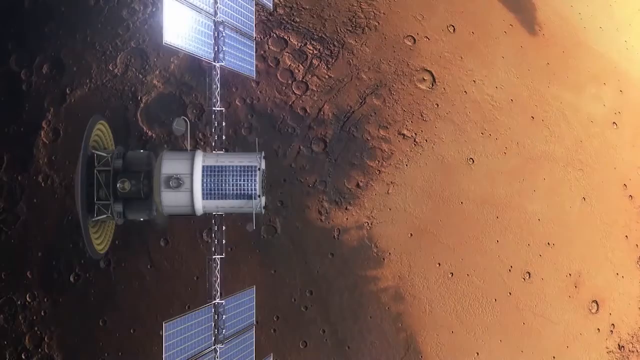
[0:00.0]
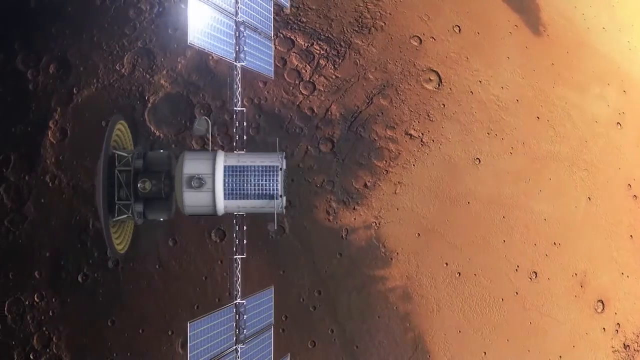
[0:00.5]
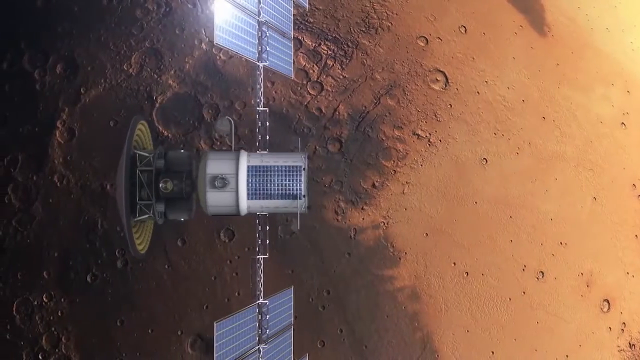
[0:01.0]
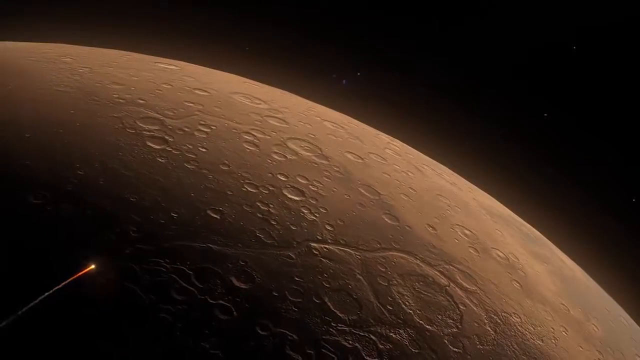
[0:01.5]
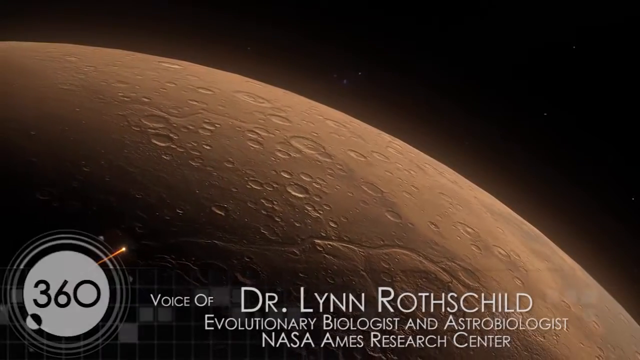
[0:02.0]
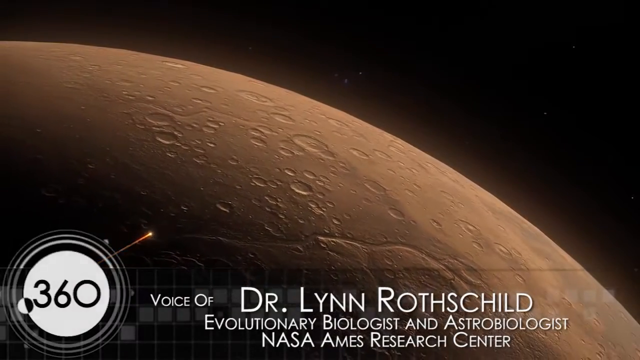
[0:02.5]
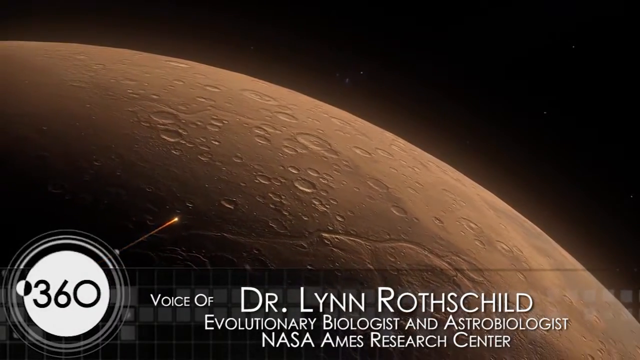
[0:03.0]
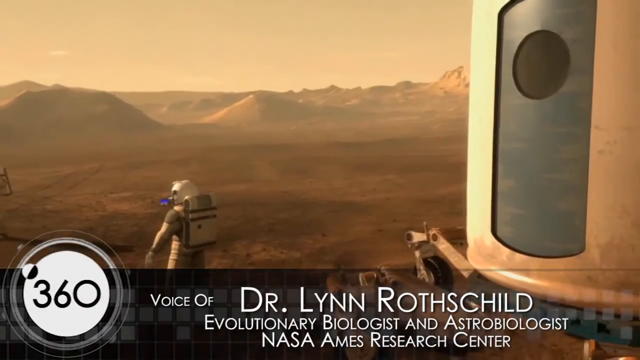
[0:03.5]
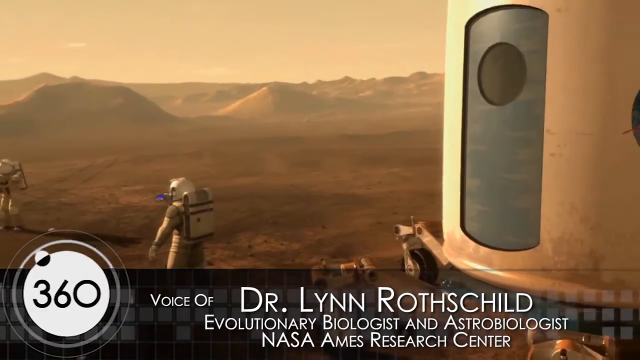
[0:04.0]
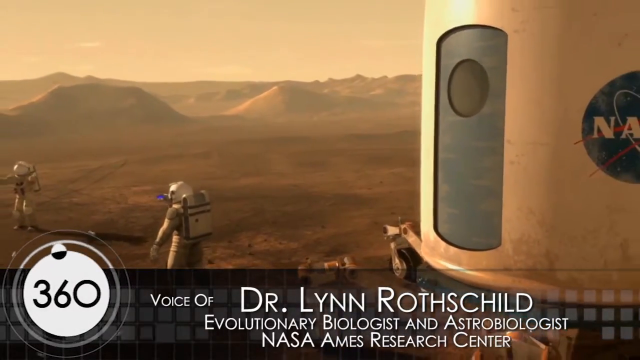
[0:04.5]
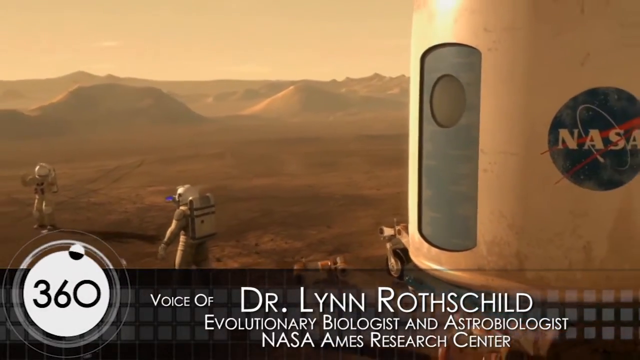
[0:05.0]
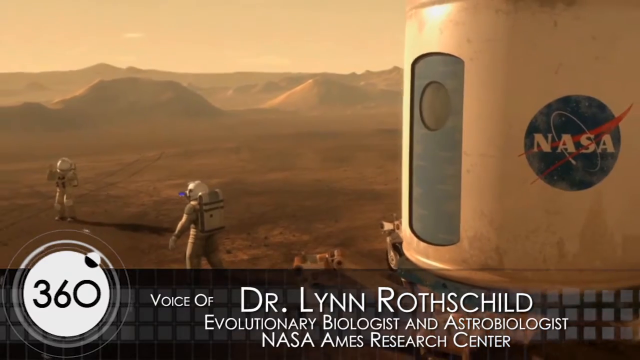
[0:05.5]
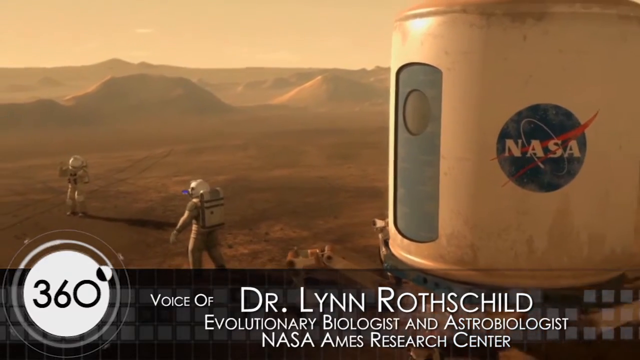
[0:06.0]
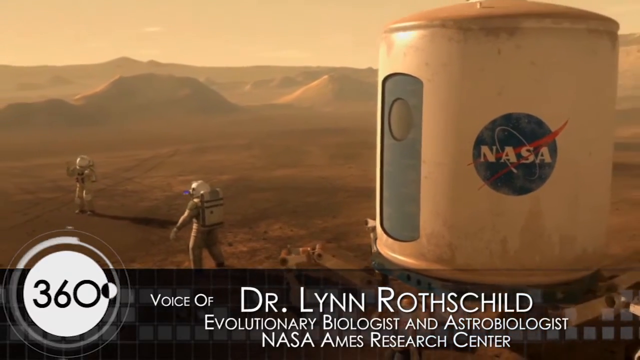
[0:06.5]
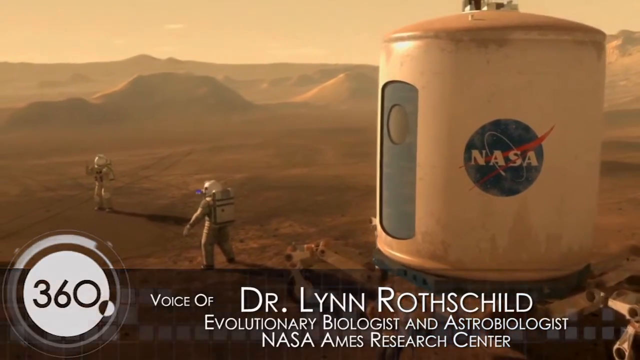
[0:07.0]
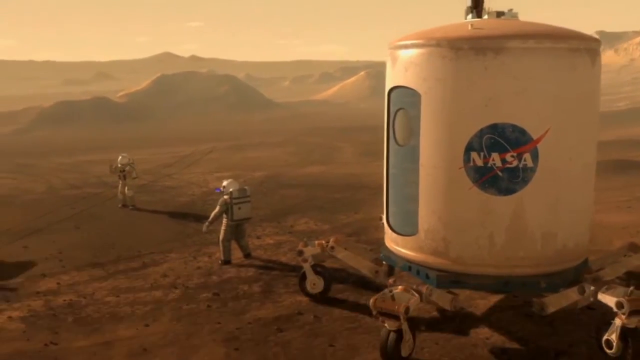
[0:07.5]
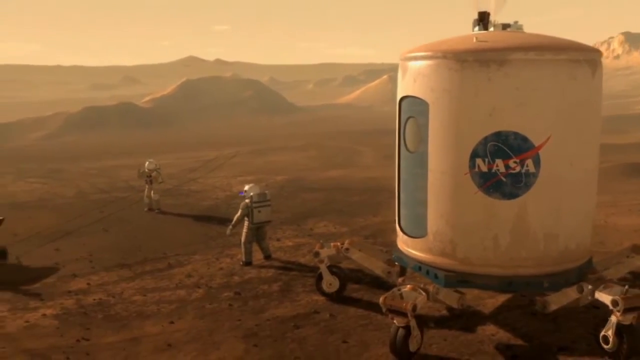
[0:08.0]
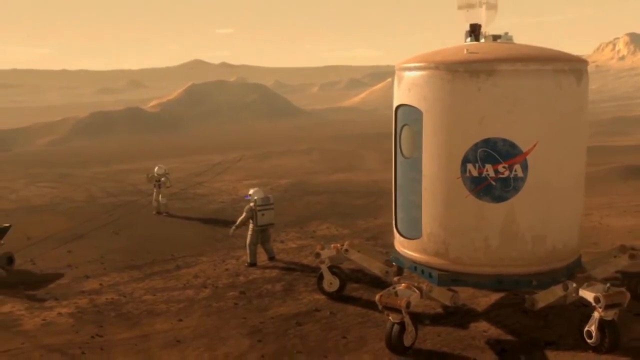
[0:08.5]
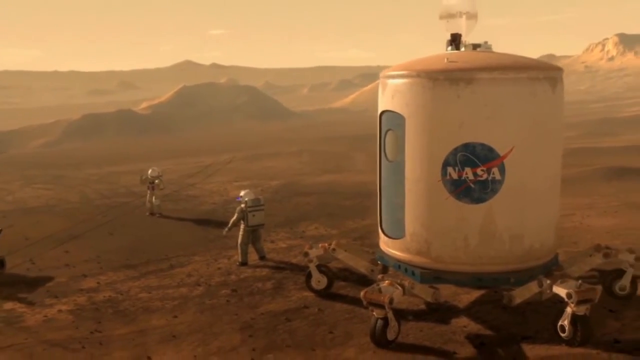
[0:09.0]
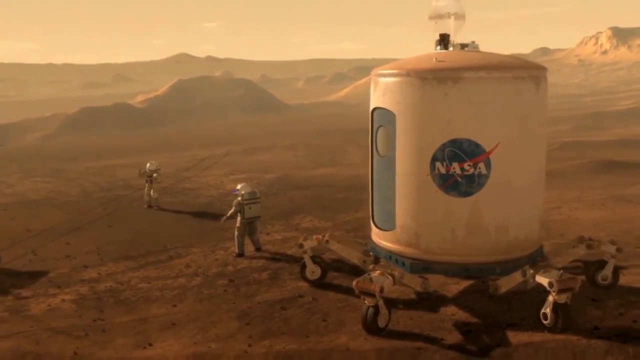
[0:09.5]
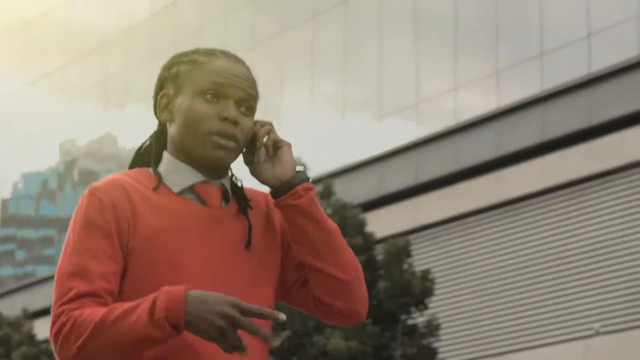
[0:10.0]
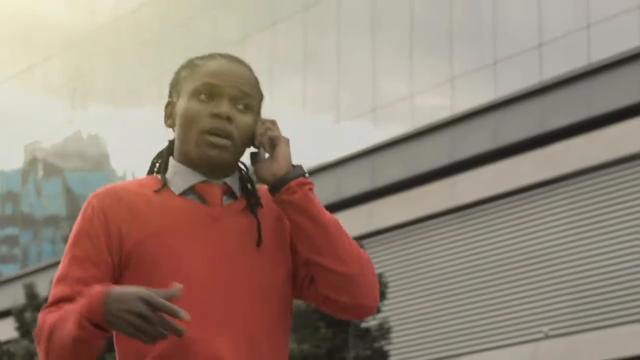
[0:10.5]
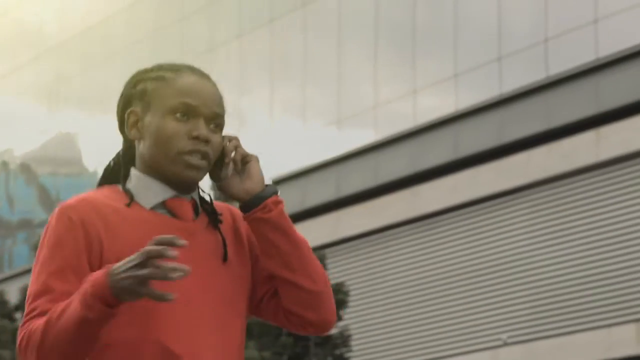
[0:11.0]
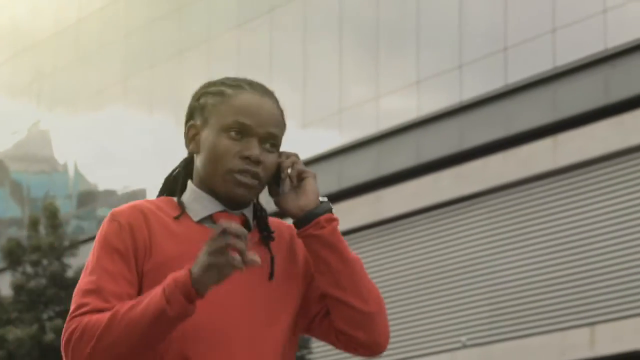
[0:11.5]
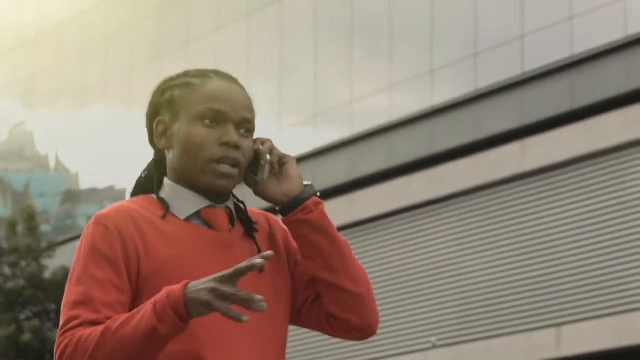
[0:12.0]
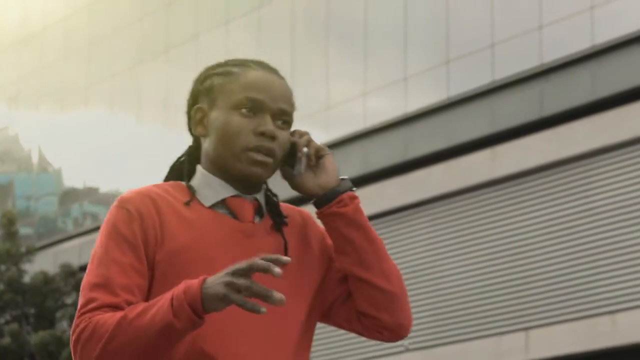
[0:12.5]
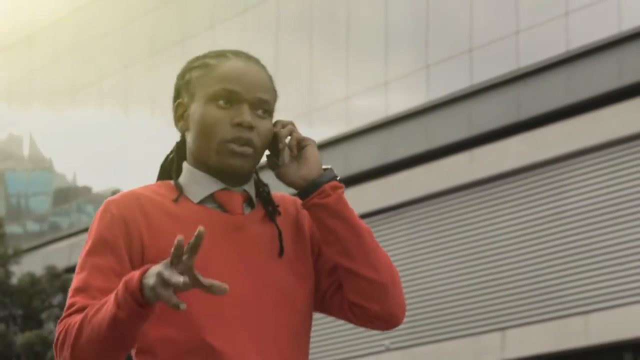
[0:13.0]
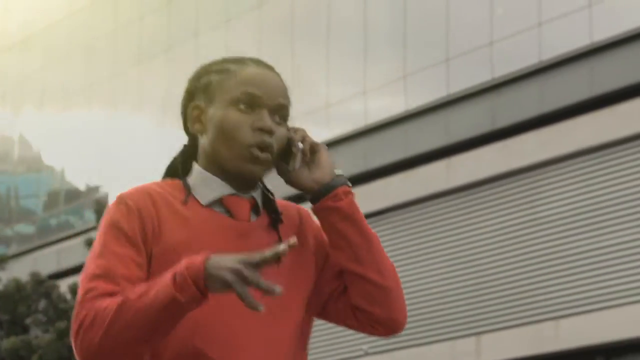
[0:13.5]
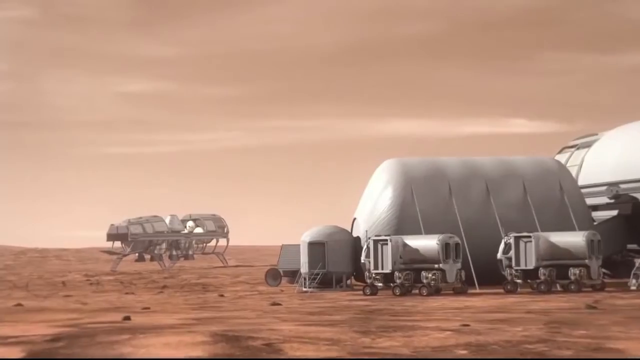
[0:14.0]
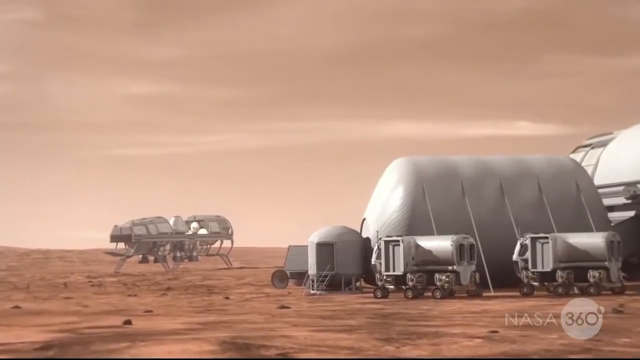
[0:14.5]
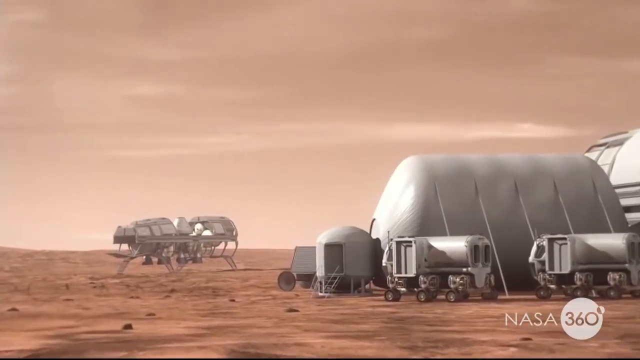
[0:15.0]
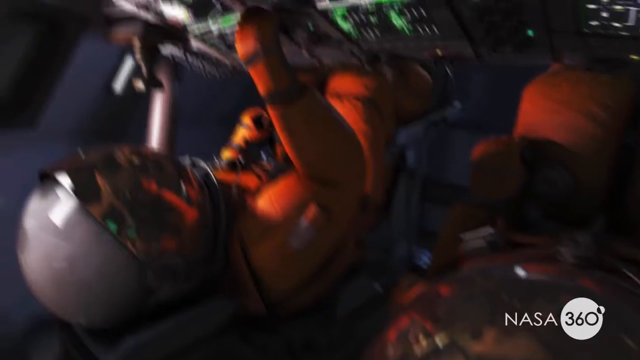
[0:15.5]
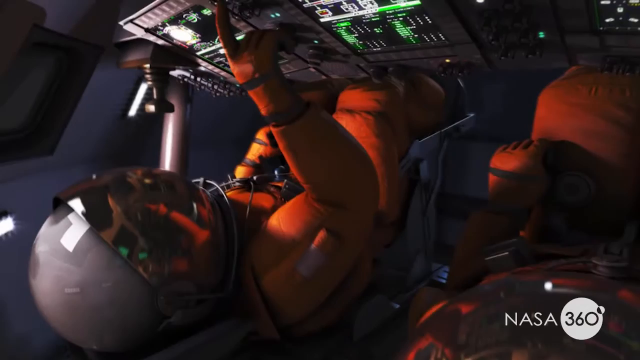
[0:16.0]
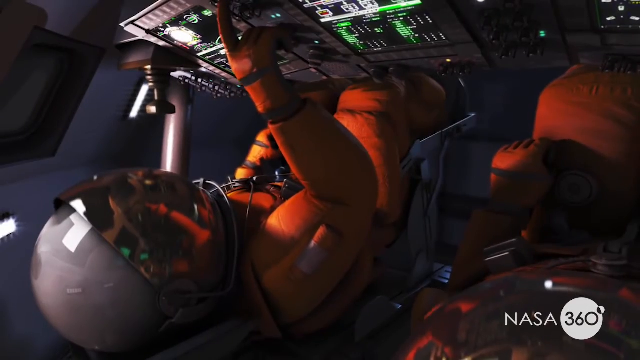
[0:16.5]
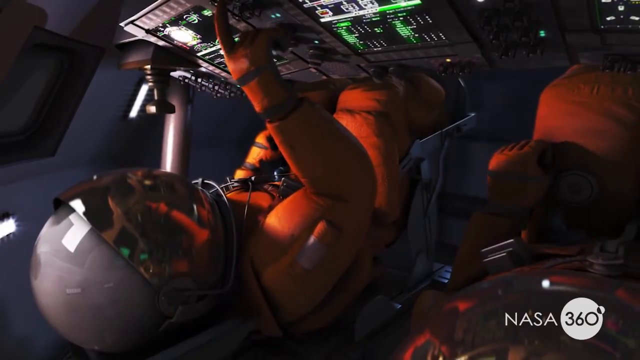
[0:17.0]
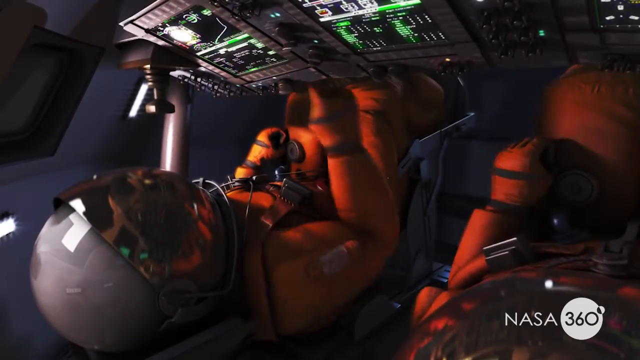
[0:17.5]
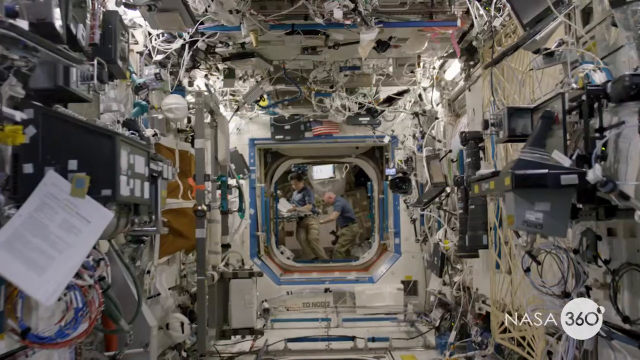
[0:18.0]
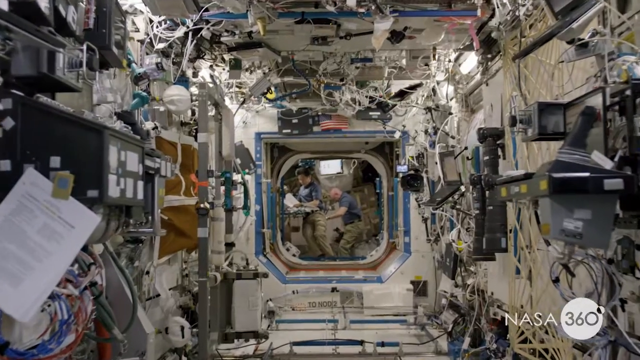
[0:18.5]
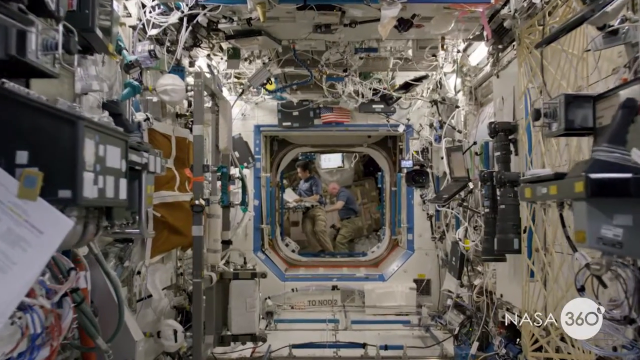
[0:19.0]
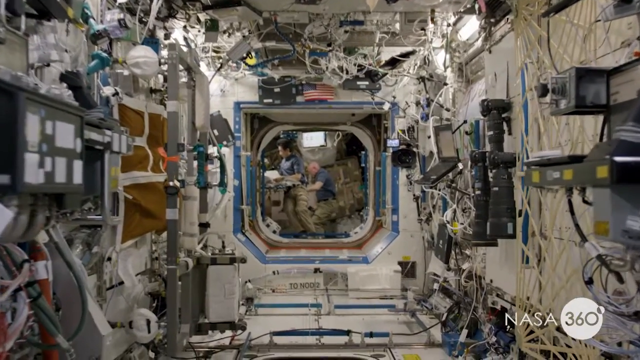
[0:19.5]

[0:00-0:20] A 3D render shows a large satellite orbiting a red planet. Text appears at the bottom that reads "360 voice of Dr. Lynn Rothschild, evolutionary biologist and astrobiologist, NASA Ames Research Center." A further panning shot of the red planet follows, with a large object resembling a comet or fireball going past it. The video then cuts to a 3D render of an astronaut in a white spacesuit on a red planet, and the camera slowly zooms out to reveal a cylindrical lander next to the astronaut, with a blue door on its left side and the NASA logo on its side. Another astronaut is also visible, facing the camera and raising their right hand. As the camera continues panning outward, multiple wheels are visible on the bottom of the lander. The scene changes to a real person speaking on a smartphone, holding it to their left ear with their left hand while repeatedly motioning with their right hand in front of their chest, then making grabbing motions for emphasis. The footage cuts back to 3D renders of a base on a distant planet covered with red sand and dirt; the base is largely white and made of various sections, and there are multiple vehicles with large all-terrain tires. Next comes an interior shot, still a 3D render, of a spaceship's crew cabin, where two astronauts wear orange spacesuits with white helmets and gold reflective visors. The astronaut on the left is pushing various buttons on a console in front of them.